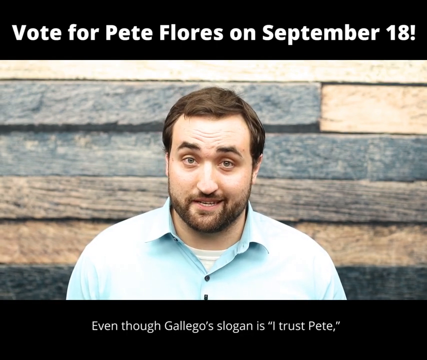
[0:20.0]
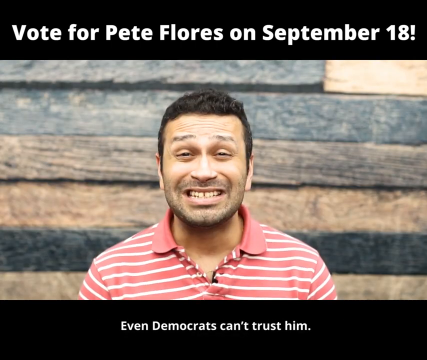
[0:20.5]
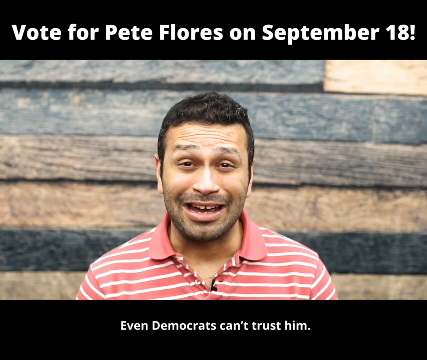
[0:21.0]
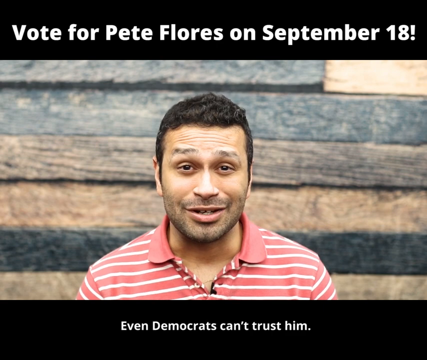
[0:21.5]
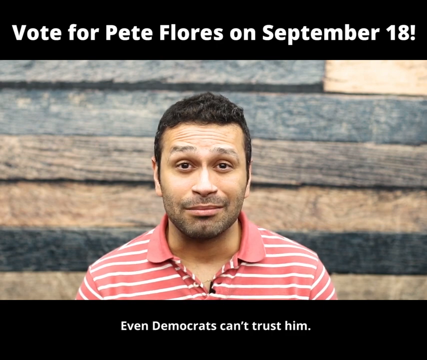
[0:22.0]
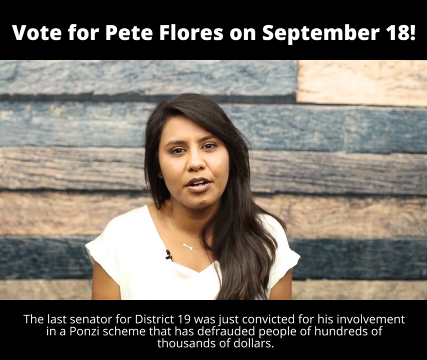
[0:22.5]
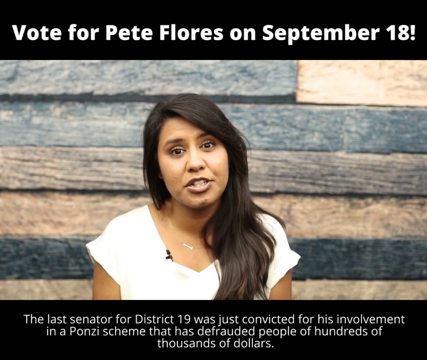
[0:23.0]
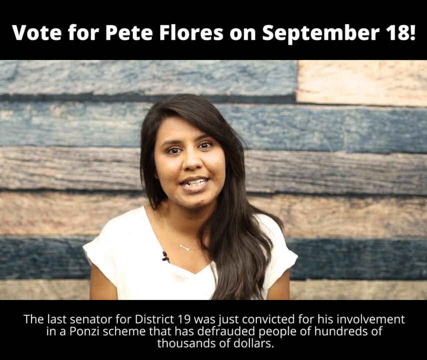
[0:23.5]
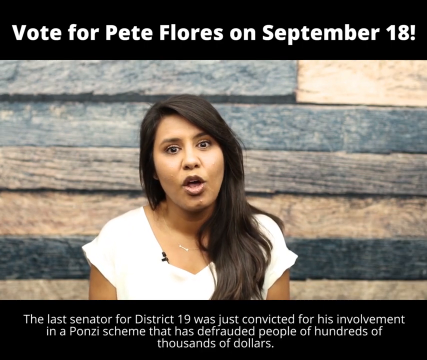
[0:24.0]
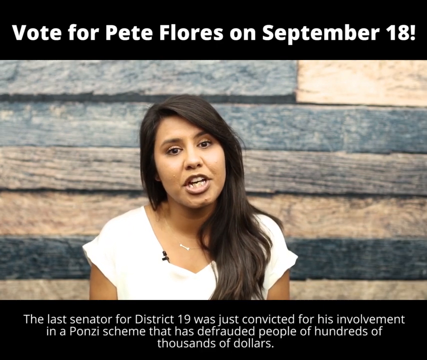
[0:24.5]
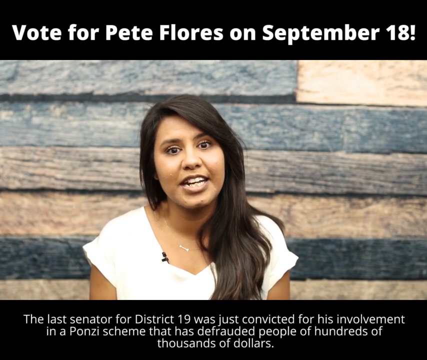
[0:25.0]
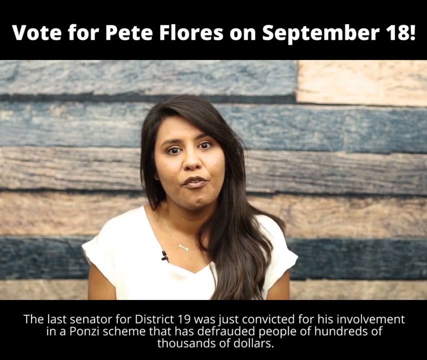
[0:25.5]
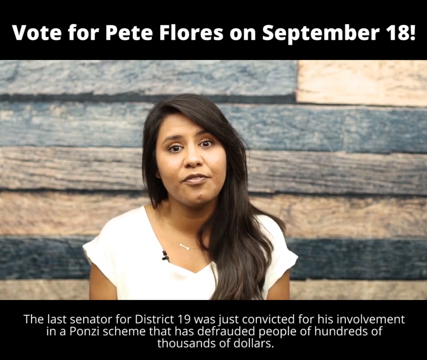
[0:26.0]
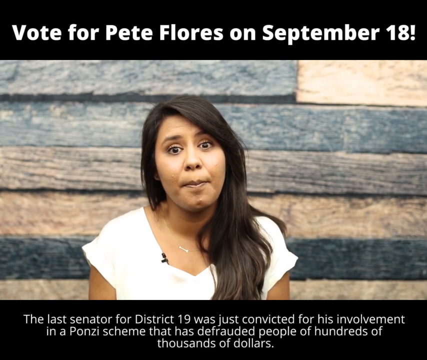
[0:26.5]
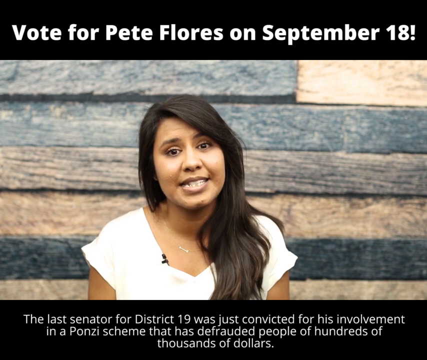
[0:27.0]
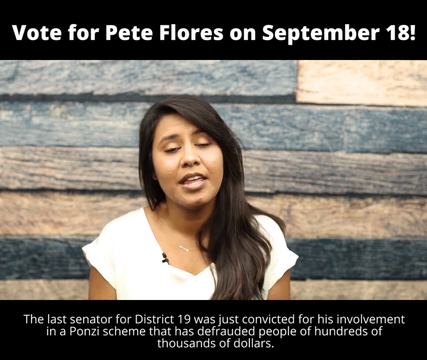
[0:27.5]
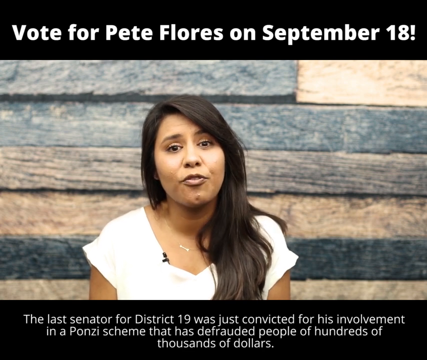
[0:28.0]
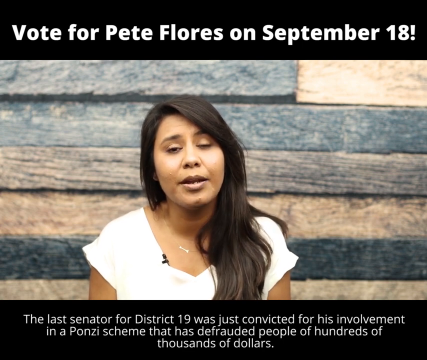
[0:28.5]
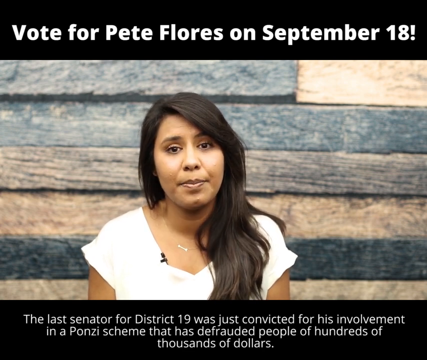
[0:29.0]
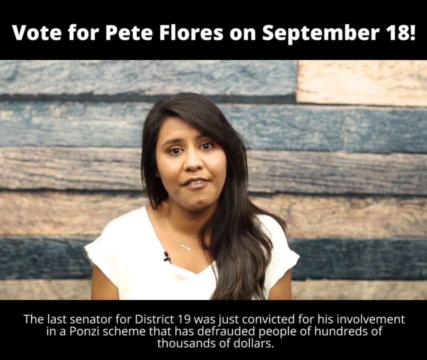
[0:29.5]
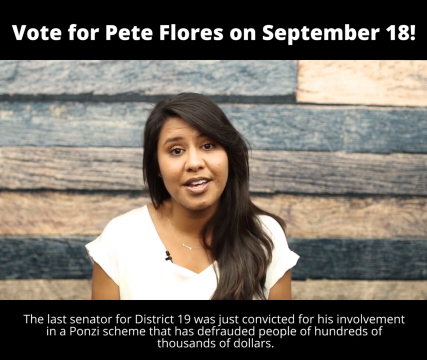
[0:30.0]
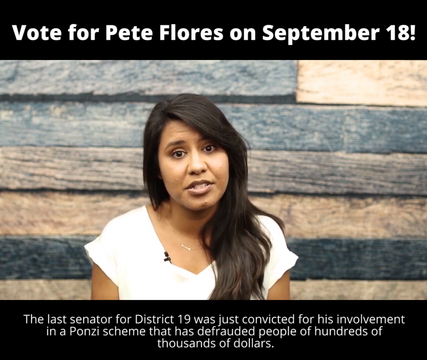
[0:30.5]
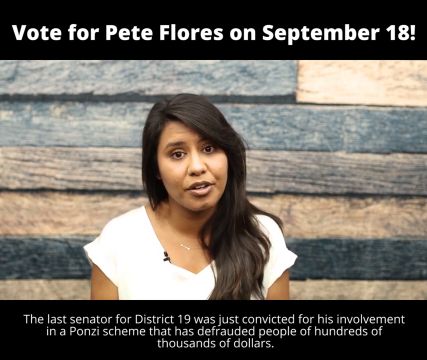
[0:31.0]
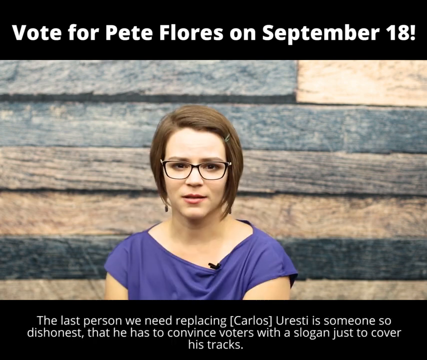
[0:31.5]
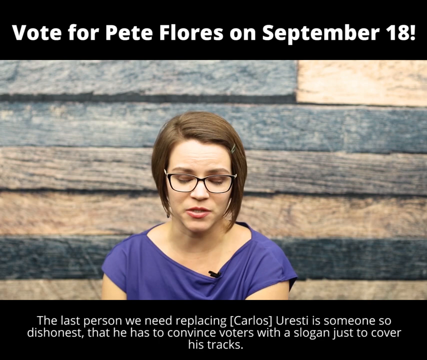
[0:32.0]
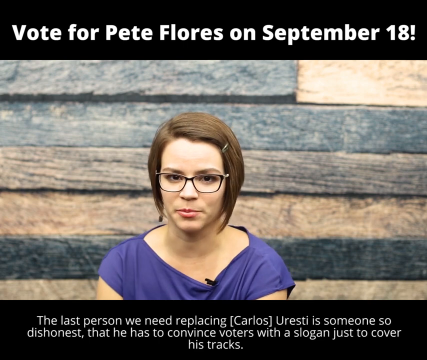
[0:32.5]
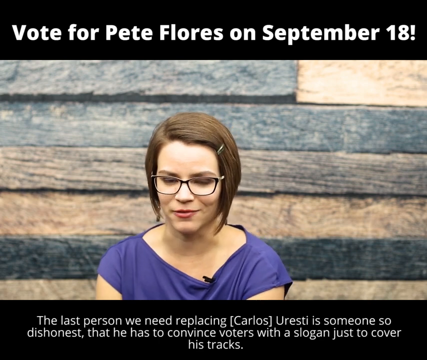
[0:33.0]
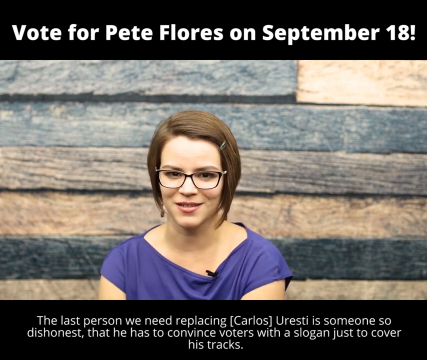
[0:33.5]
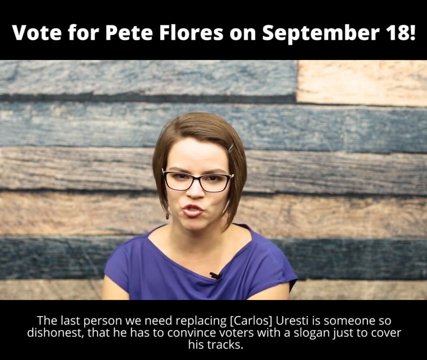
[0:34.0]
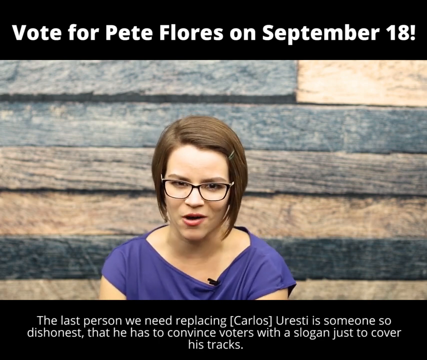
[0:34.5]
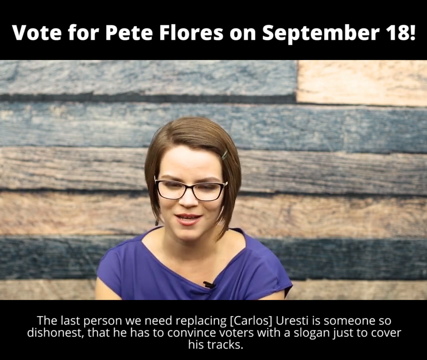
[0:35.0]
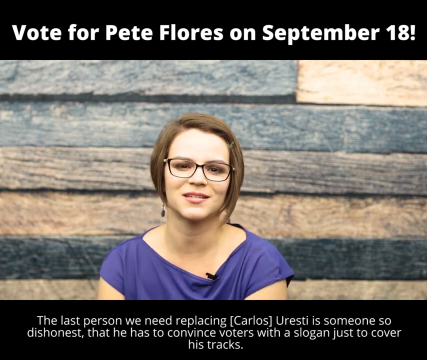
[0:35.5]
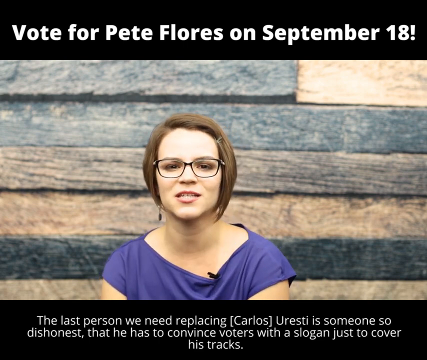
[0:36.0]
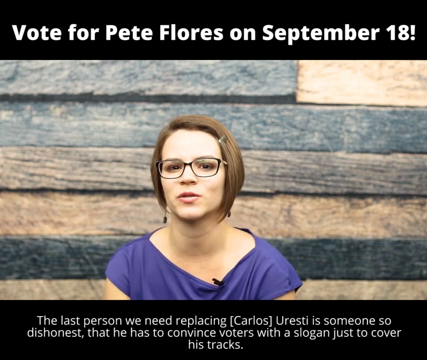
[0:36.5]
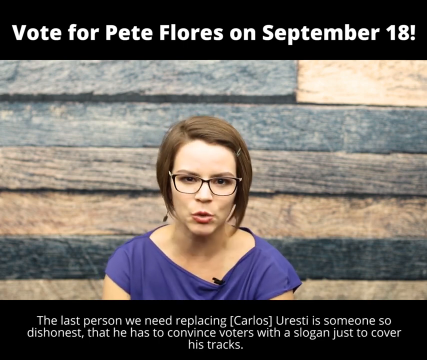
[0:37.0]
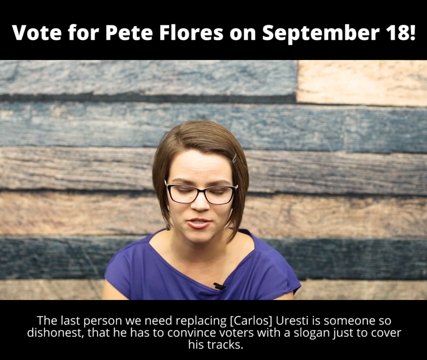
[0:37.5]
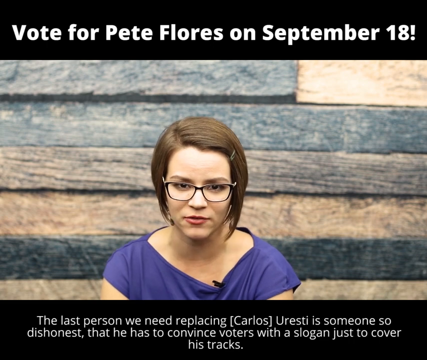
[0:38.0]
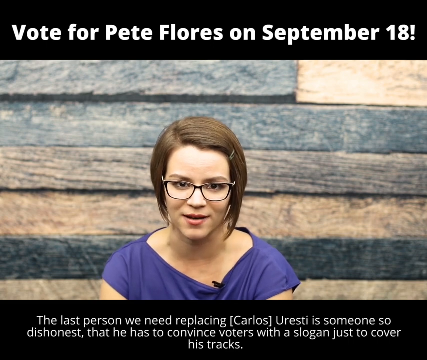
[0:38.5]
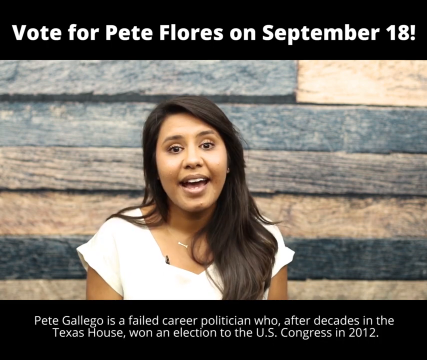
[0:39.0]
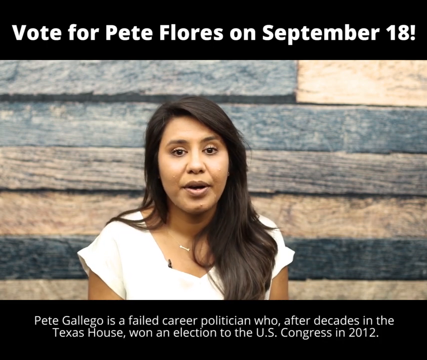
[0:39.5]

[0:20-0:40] A young man with short dark hair, a beard and a moustache, wearing a blue collared shirt, stands talking to the camera. A banner above him reads "Vote for Pete Flores on September the 18th", and words underneath him say "even though Gallego's slogan is I trust Pete." The image changes to a different man with short black hair in a red T-shirt with white stripes, standing in front of a background of wooden slats running horizontally across the wall; the words under him now say "even Democrats can't trust him." Next is a young woman with long black hair in a white top, with a small silver chain around her neck, talking directly to the camera. The words underneath her read "the last senator for District 19 was just convicted for his involvement in a Ponzi scheme that has defrauded people of hundreds of thousands of dollars," and then change to "the last person we need replacing Carlos is someone so dishonest that he has to convince voters with a slogan just to cover his tracks."